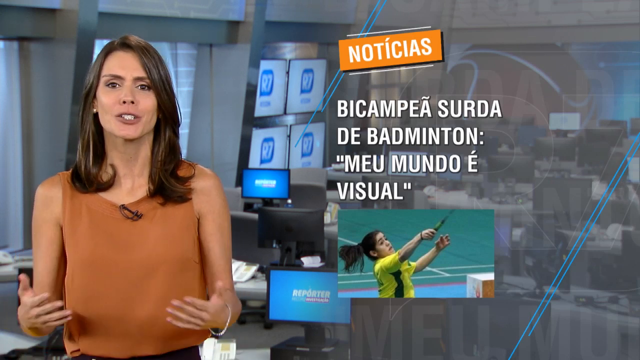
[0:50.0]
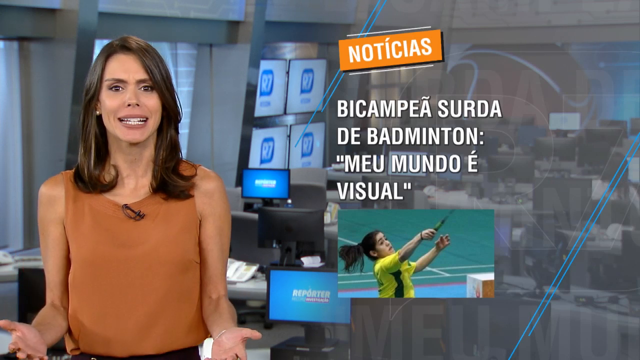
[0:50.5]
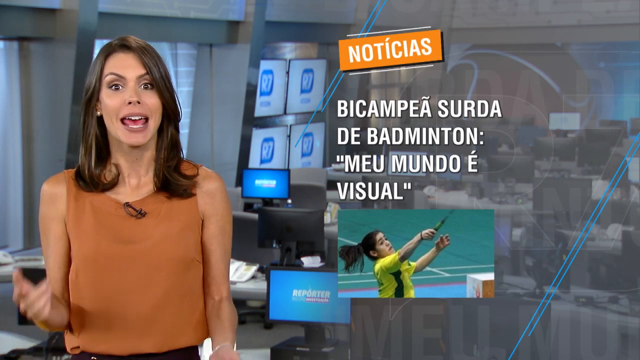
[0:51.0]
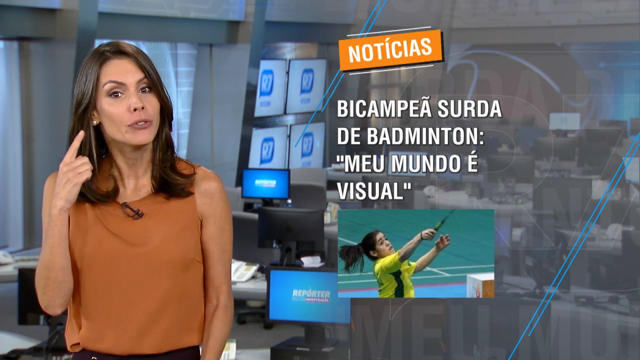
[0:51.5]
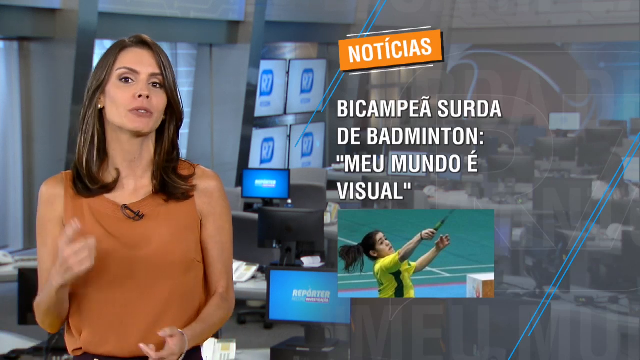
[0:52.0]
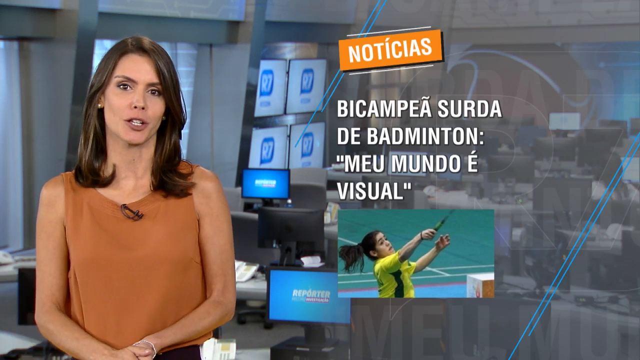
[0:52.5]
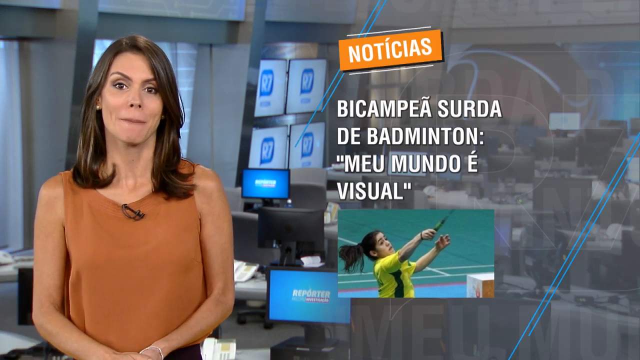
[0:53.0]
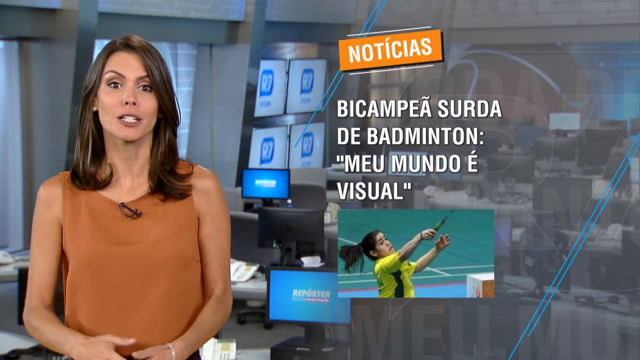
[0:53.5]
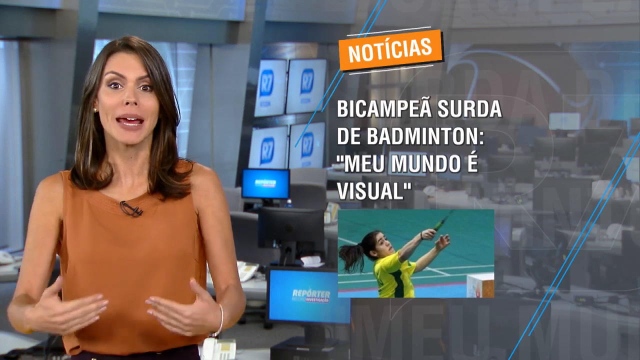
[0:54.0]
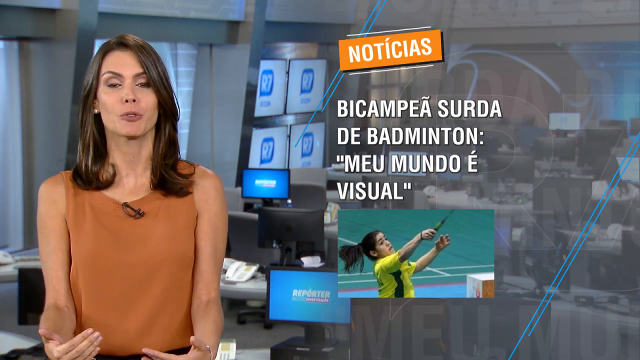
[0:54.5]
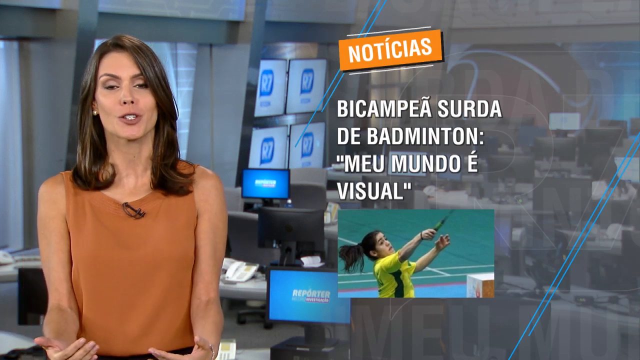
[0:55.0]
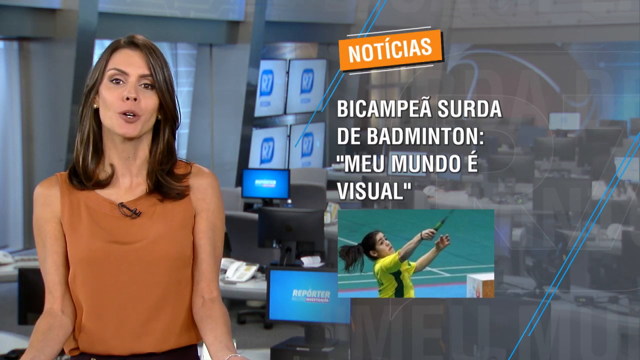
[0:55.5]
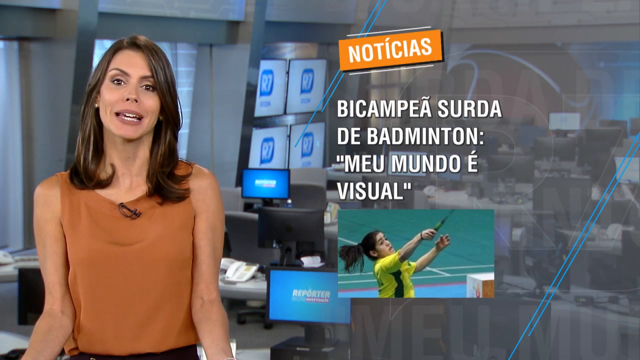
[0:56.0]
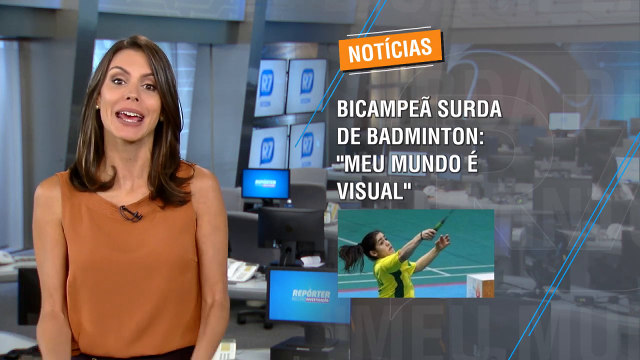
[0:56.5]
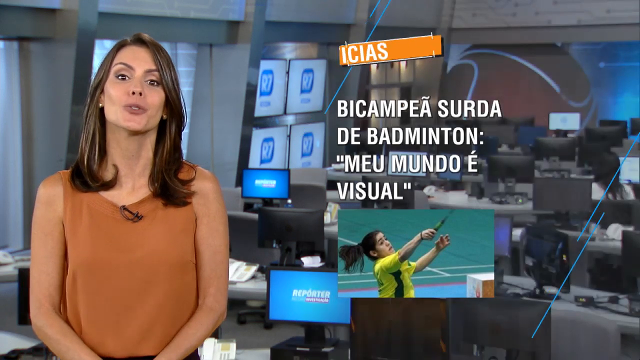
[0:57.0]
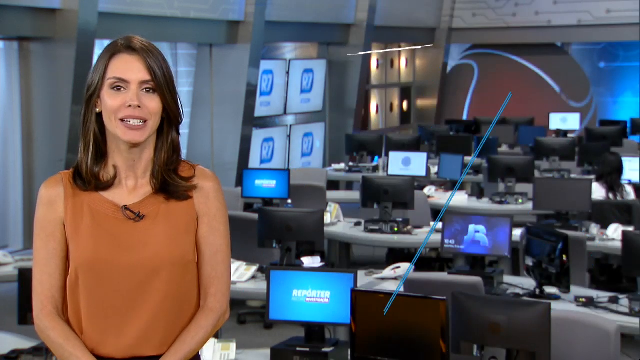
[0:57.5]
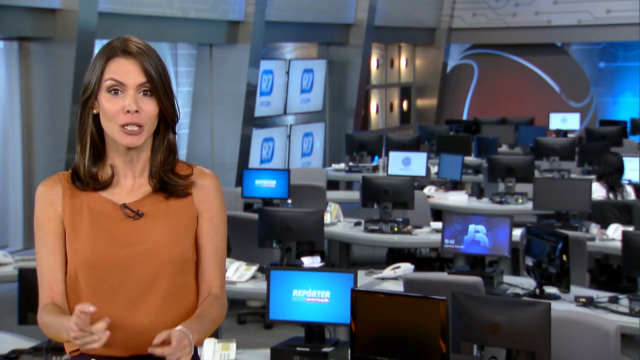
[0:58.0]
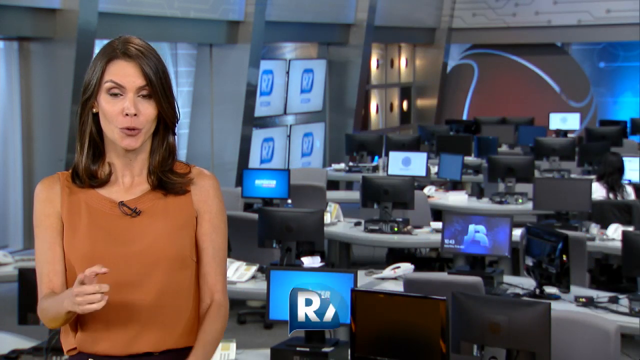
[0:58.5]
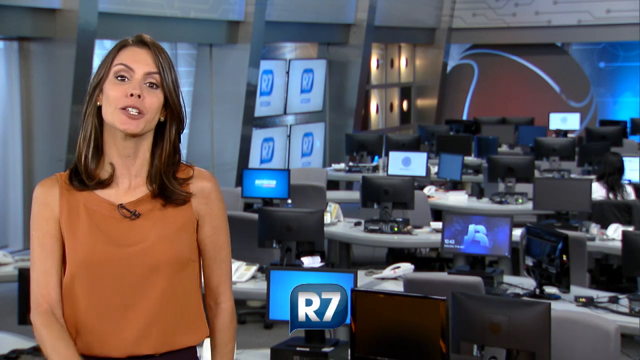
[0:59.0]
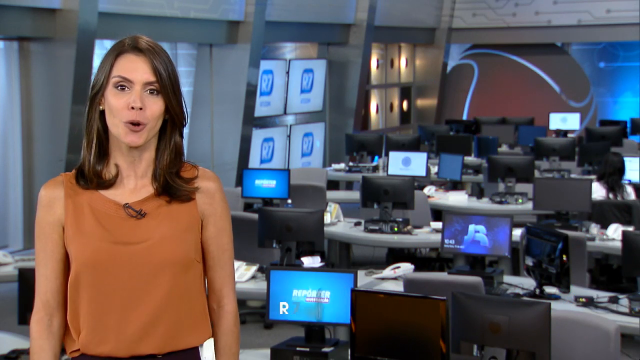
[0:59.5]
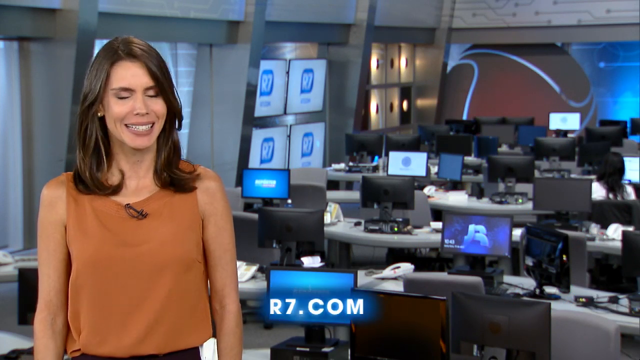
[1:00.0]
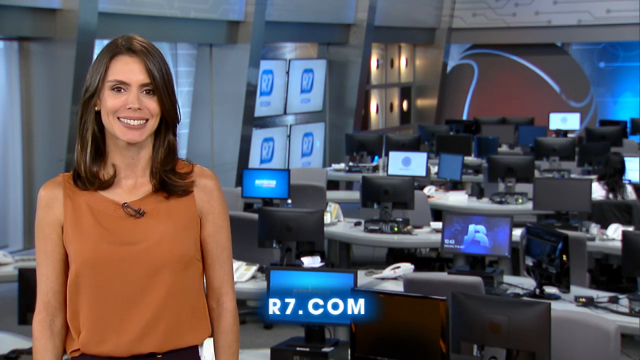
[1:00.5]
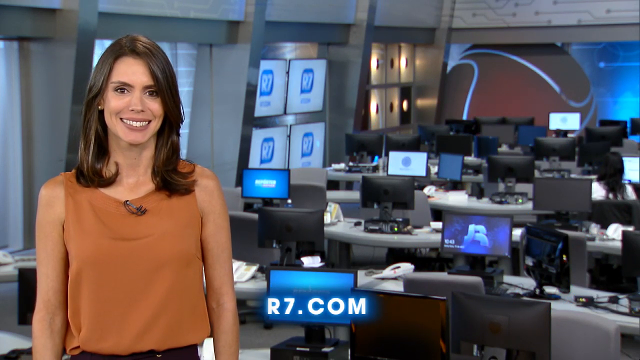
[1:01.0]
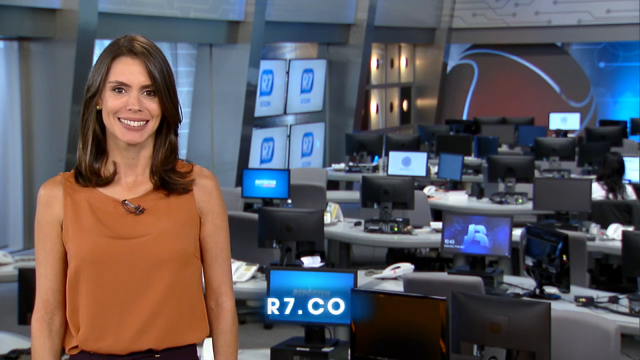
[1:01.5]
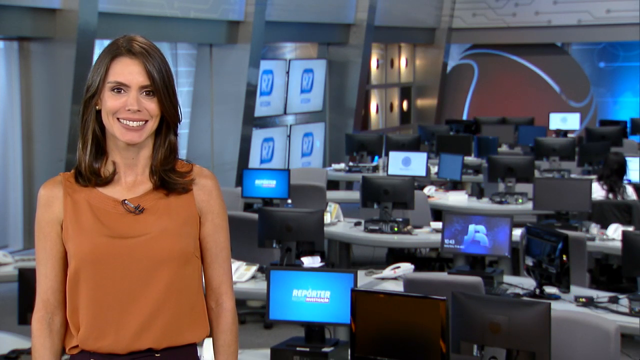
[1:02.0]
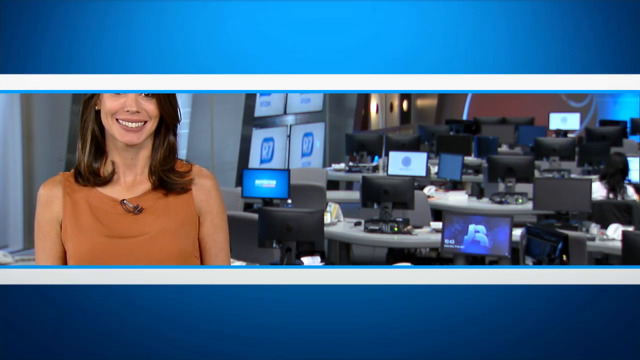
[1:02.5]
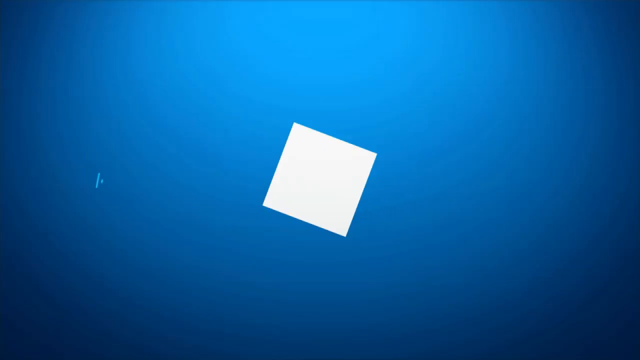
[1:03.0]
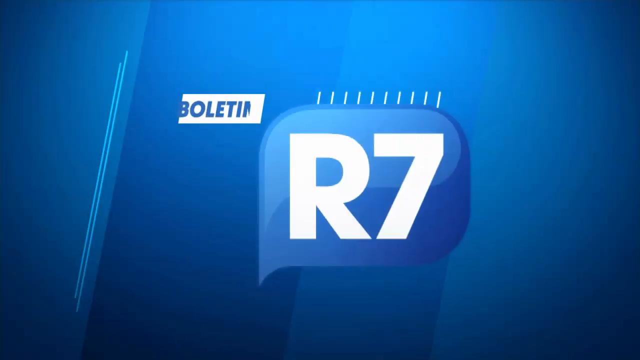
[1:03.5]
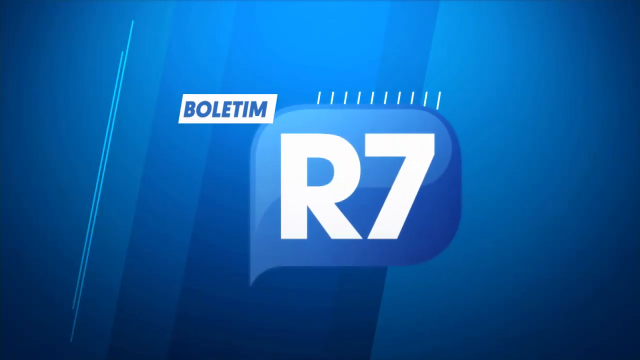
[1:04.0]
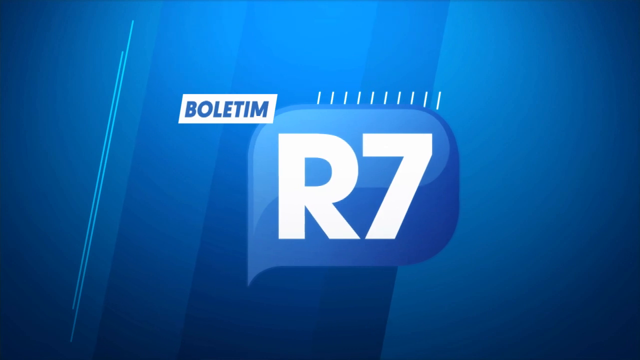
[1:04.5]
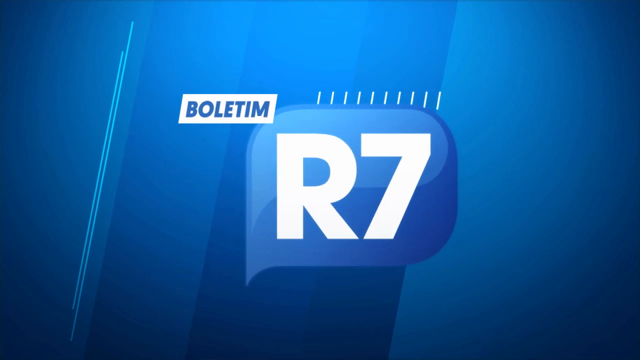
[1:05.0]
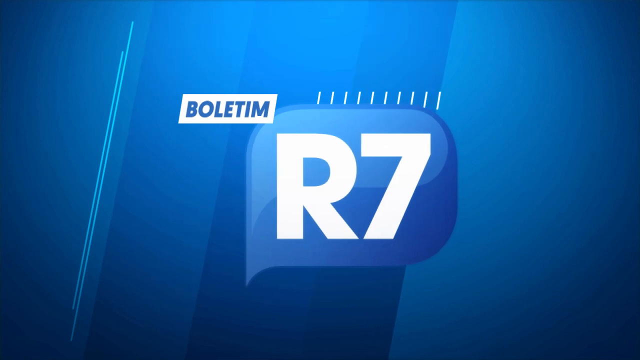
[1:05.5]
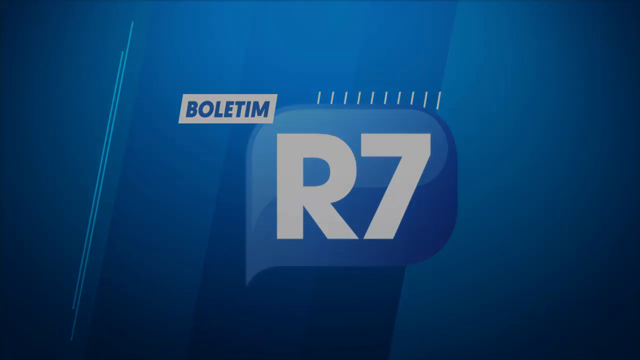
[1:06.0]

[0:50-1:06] The newscaster points to her ear to indicate that the subject of the segment is a deaf badminton player, and she talks with her hands. Then, as she gives her parting words, nothing shows on the right side anymore, and the newsroom behind her is visible: rows of desks with a computer monitor on each, a wall of TVs mounted on the left side, a mural in the background of what looks like a sphere with curvy lines, and a few pieces of wall art and windows on the left side. A website, "r7.com," appears at the bottom center with a blue glow. The video then shows the ending credits: a blue slide with a blue talk bubble containing "R7" and the word "bulletin," so the slide reads "bulletin R7."